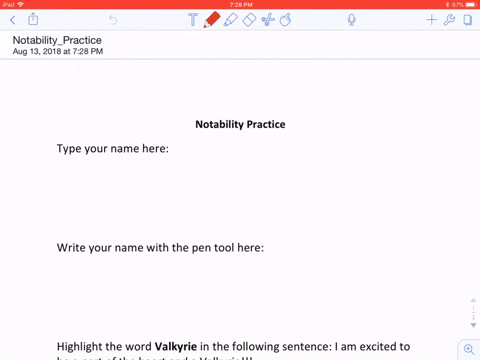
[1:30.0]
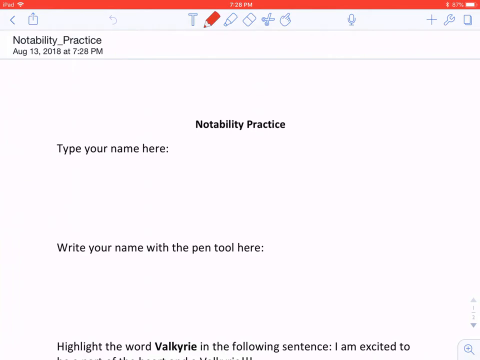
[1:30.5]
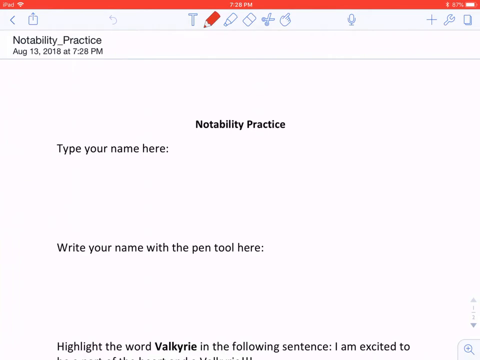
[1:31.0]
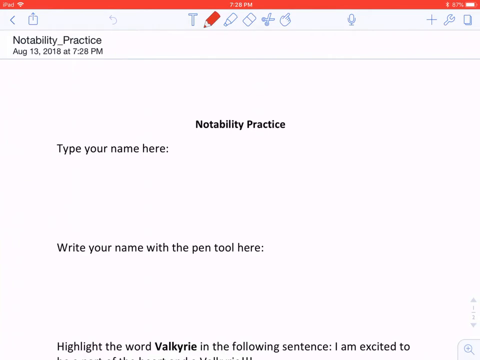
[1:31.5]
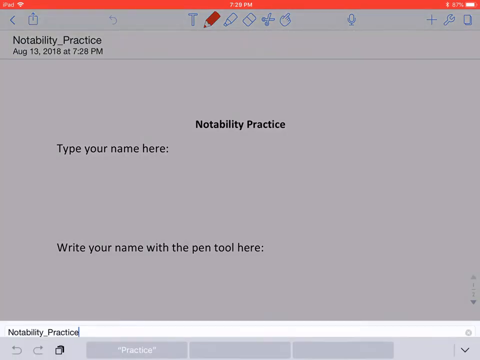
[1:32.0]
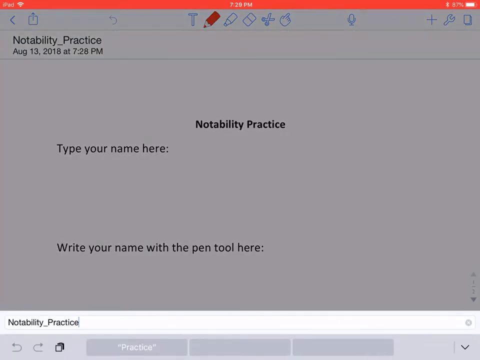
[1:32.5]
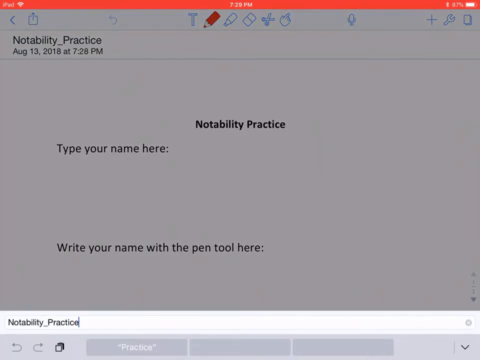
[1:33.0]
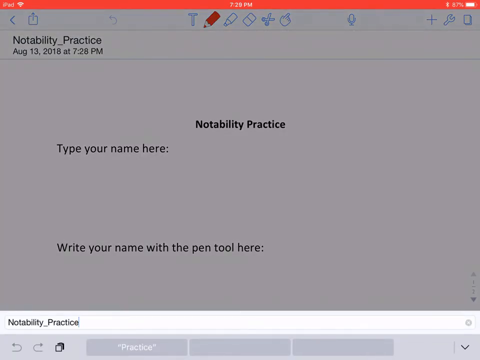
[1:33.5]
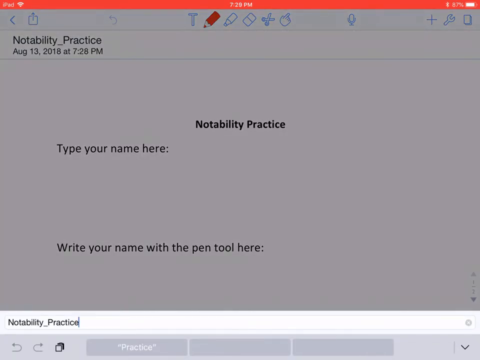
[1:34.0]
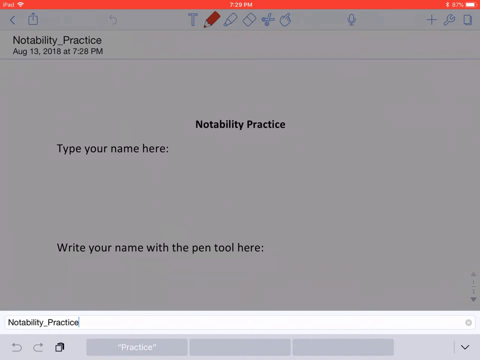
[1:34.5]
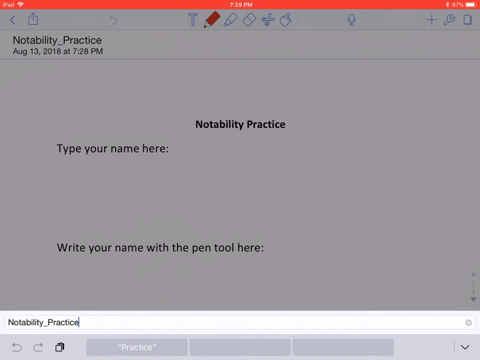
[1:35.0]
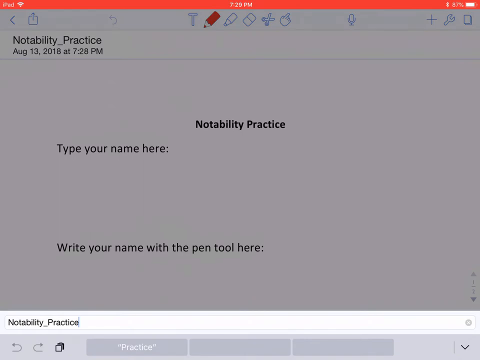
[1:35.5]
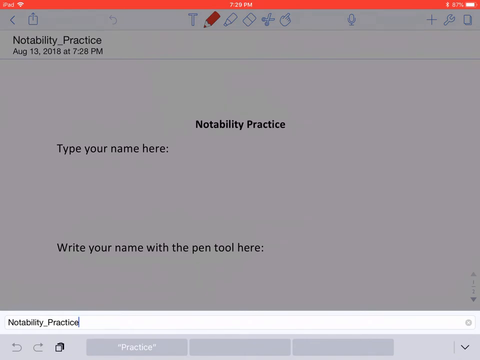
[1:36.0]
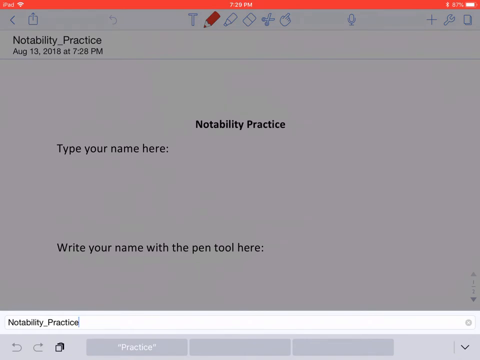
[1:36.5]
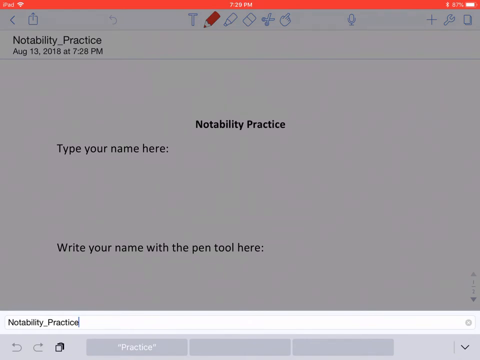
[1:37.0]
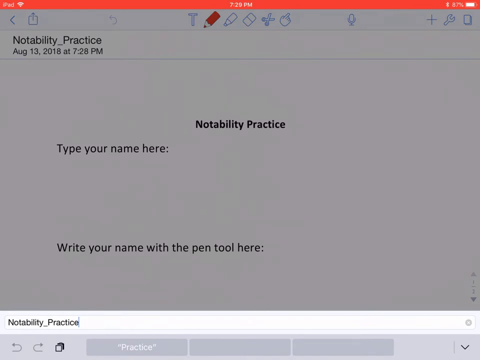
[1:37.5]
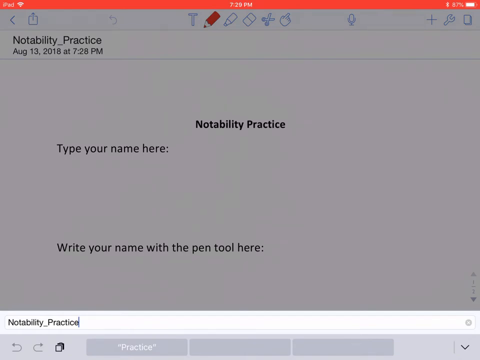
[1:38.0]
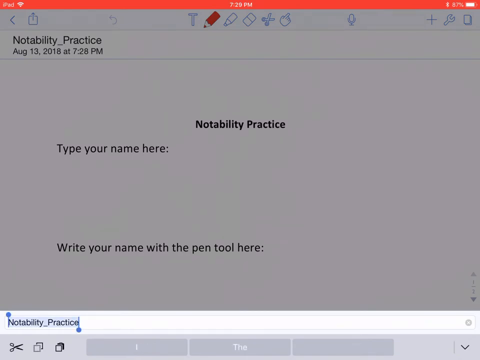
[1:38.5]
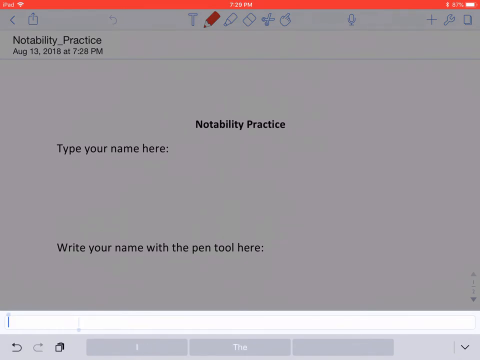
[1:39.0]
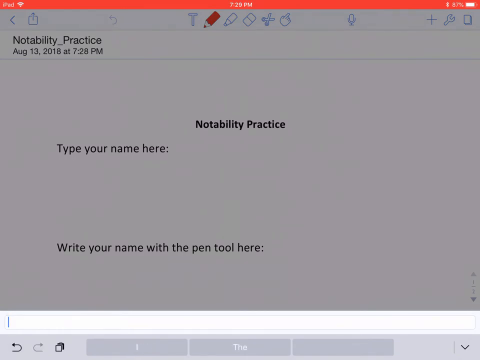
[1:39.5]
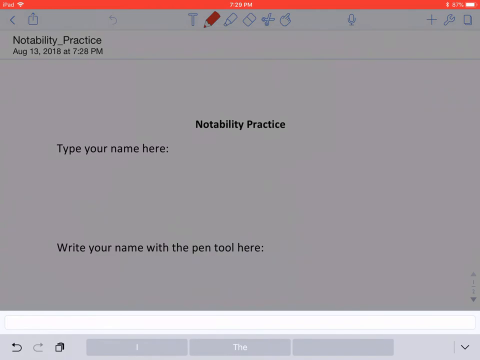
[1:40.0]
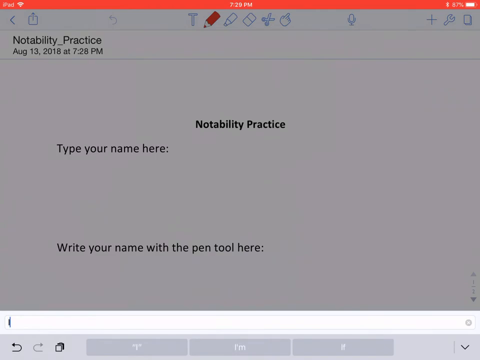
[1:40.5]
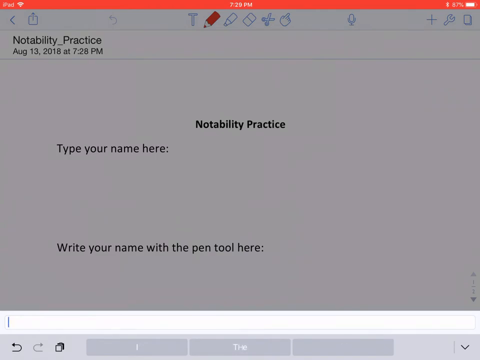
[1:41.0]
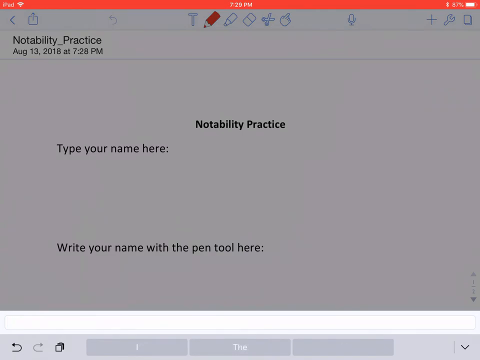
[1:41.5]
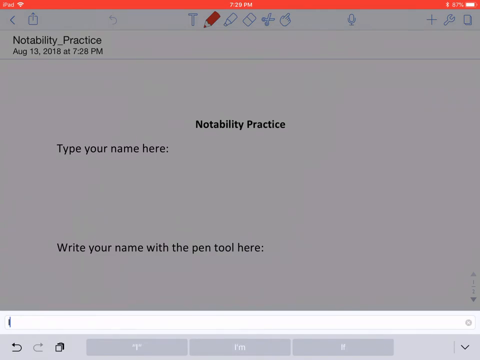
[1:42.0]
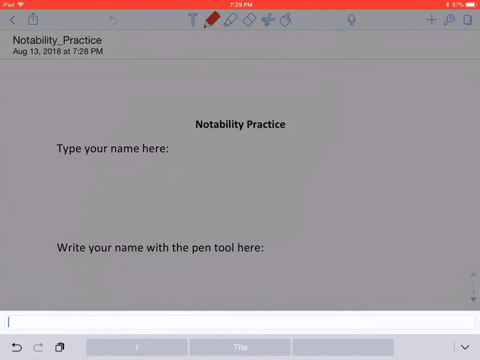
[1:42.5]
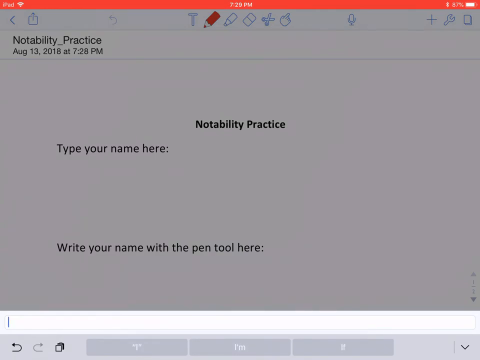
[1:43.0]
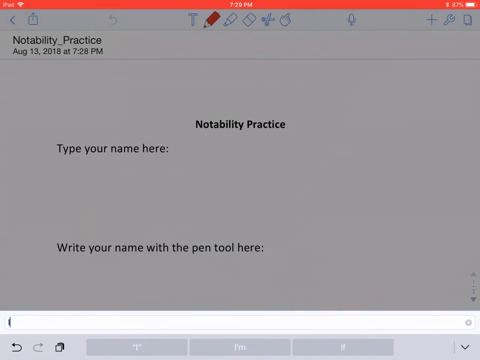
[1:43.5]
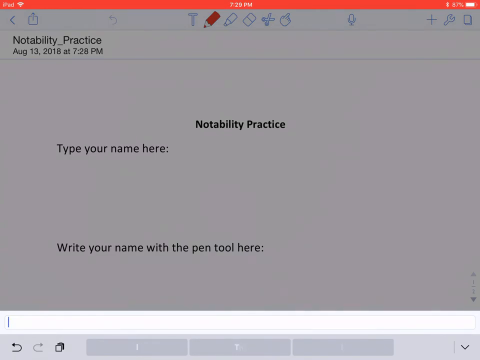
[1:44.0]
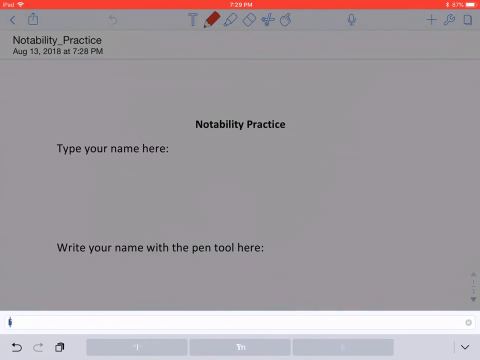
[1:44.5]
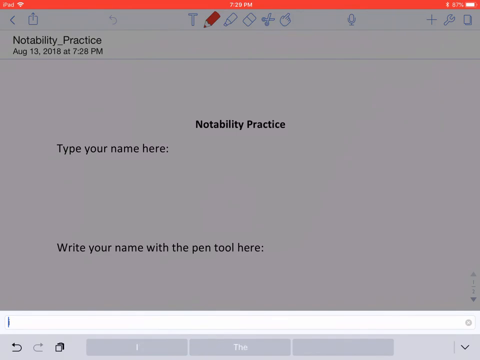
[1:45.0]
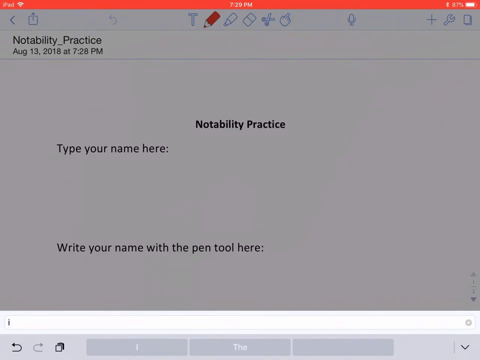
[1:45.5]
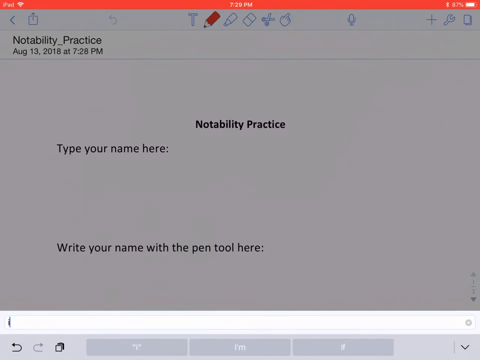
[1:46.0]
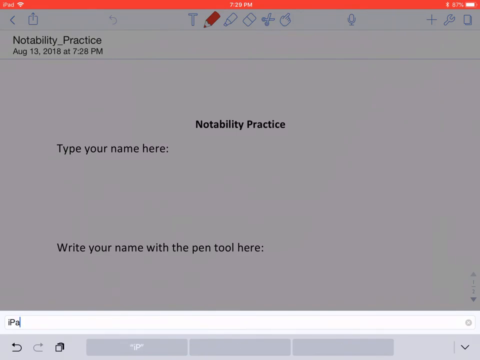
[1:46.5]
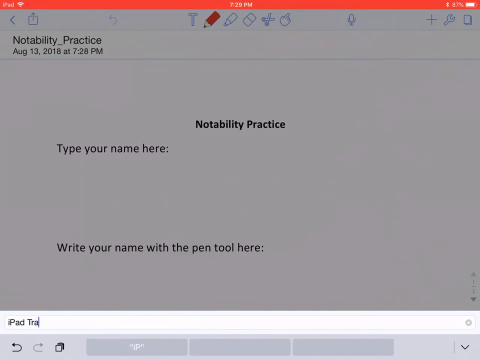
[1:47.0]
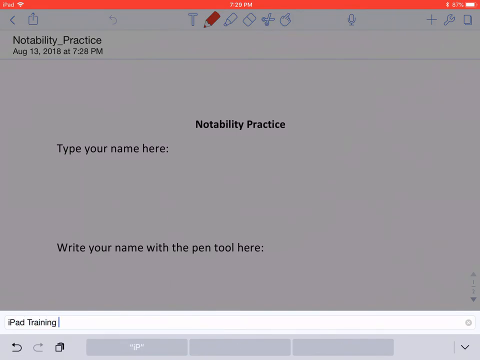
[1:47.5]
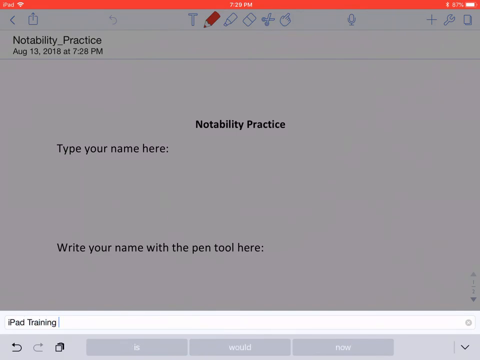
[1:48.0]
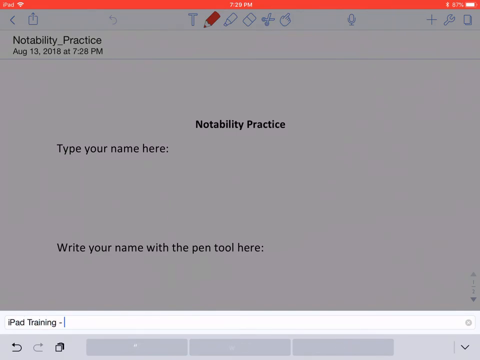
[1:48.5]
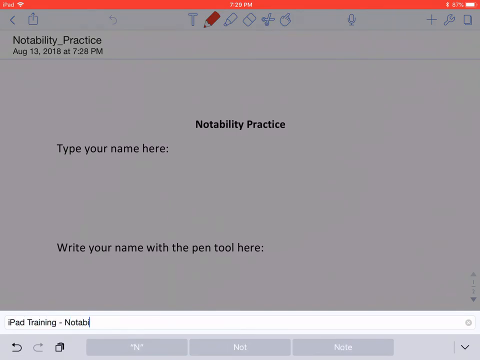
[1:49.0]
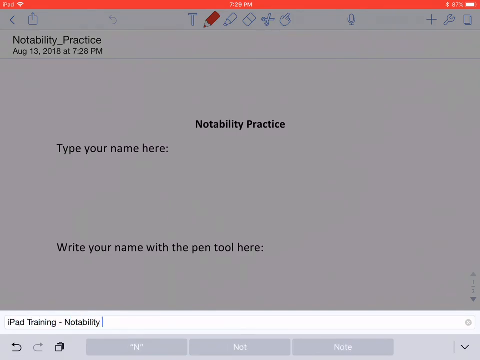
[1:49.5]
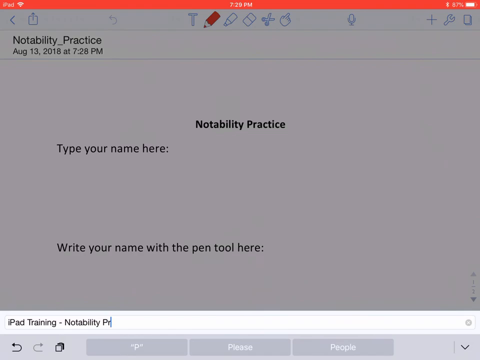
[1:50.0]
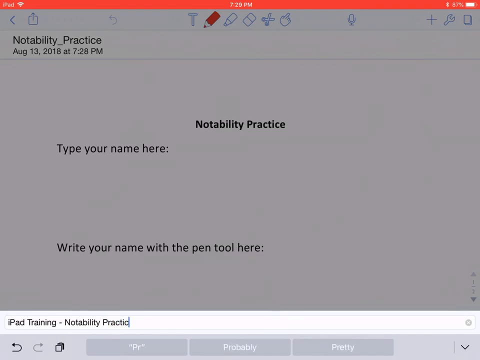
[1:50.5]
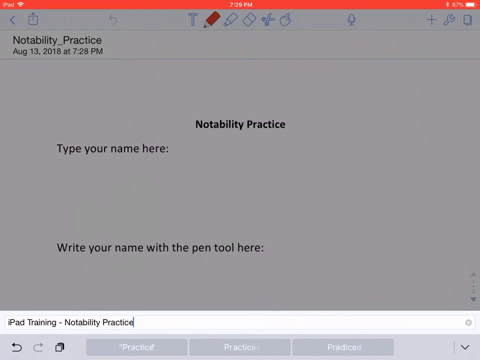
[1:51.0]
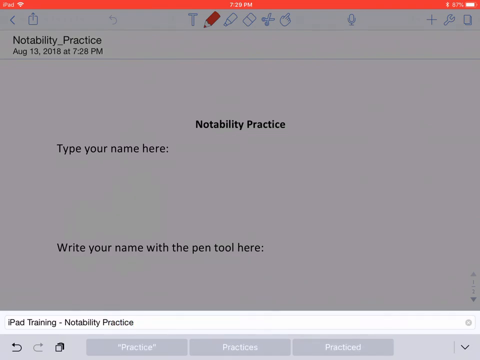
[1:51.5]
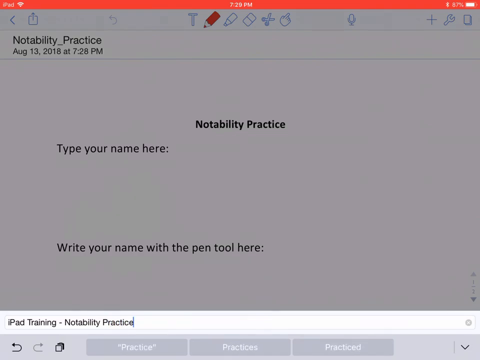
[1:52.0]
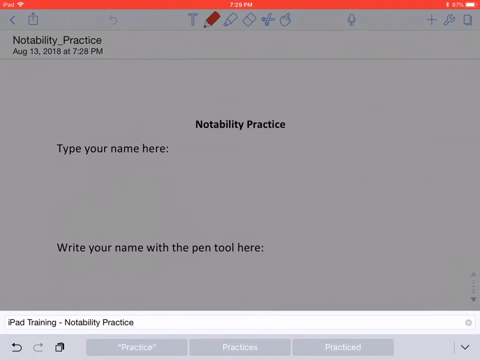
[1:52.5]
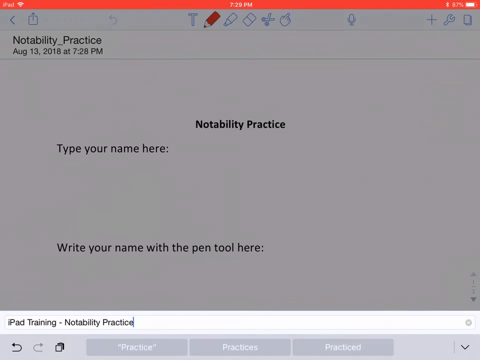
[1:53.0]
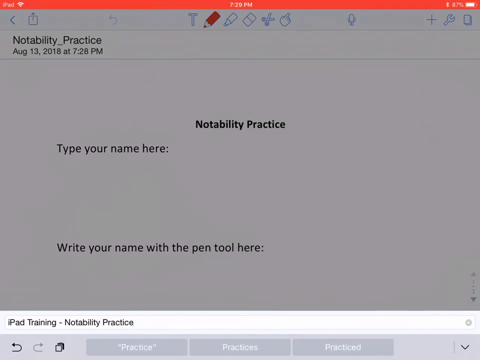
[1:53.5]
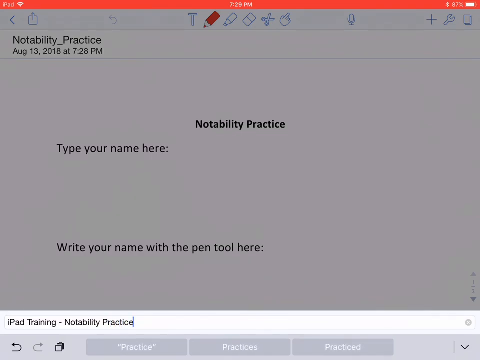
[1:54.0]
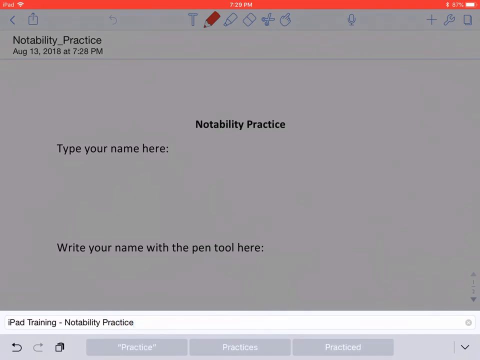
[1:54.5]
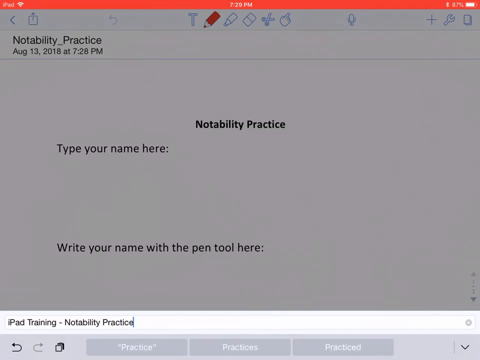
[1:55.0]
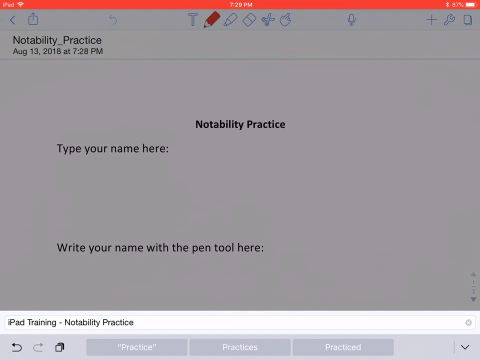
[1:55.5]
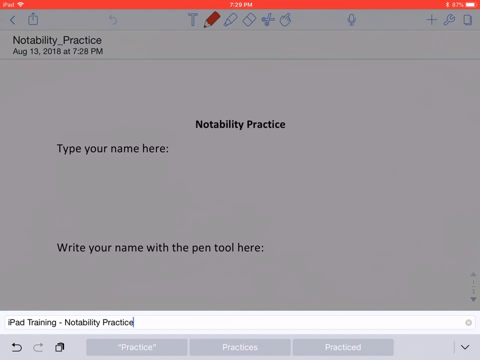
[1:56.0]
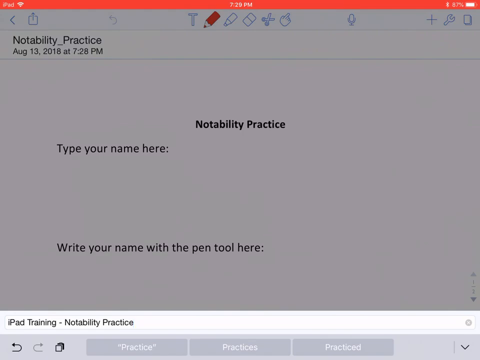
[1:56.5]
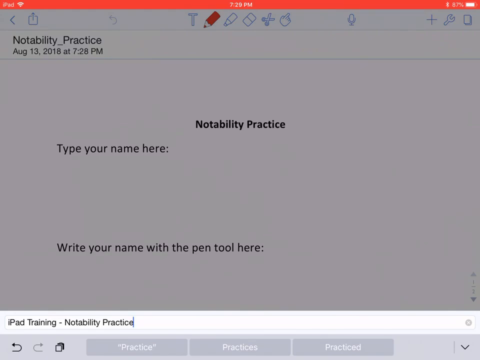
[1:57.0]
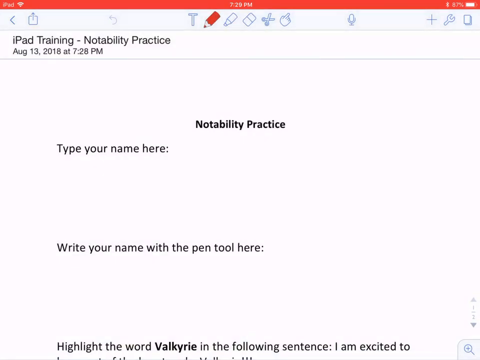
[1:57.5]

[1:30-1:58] The same document is now open in the Notability application. The user renames it from "Notability_Practice", making many false attempts starting with the letter I, and eventually settles on "iPad Training-Notability Practice", with each word capitalised except iPad, where the P is capitalised. Renaming takes a long while; about 10 seconds go into trying to type the first letter as a lowercase i, as it keeps automatically switching to an uppercase I. The bar at the very top of the screen, an iPad bar rather than a Notability bar, is red.